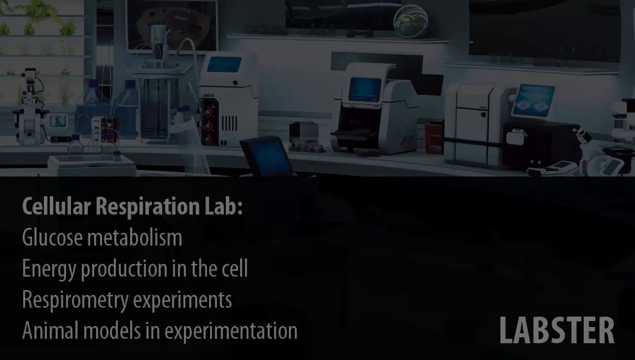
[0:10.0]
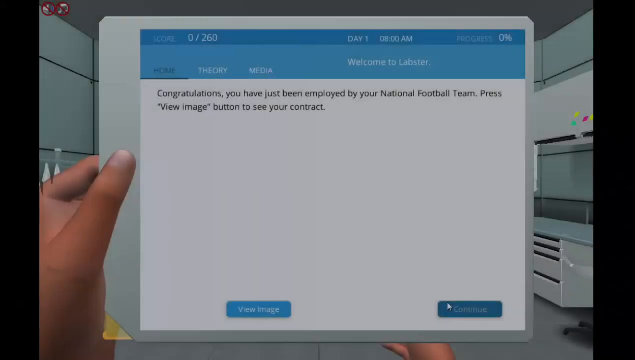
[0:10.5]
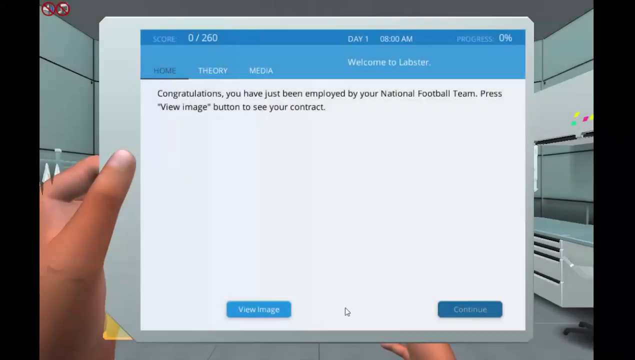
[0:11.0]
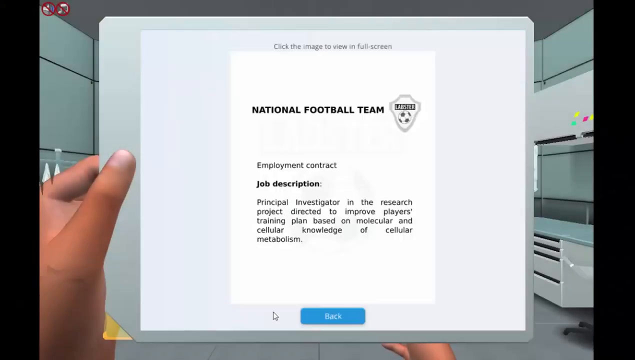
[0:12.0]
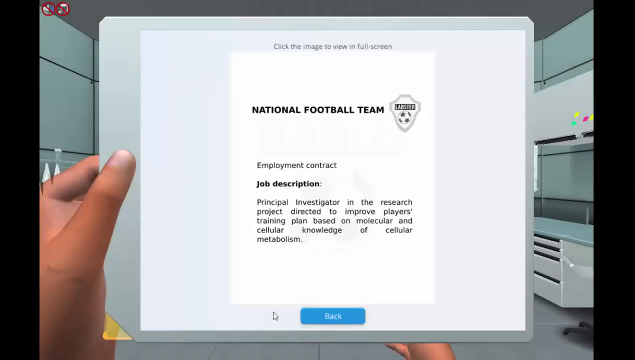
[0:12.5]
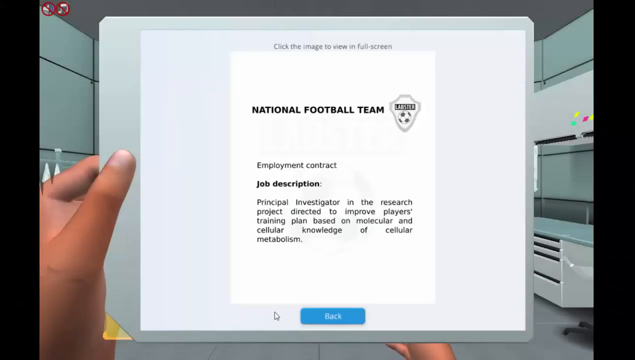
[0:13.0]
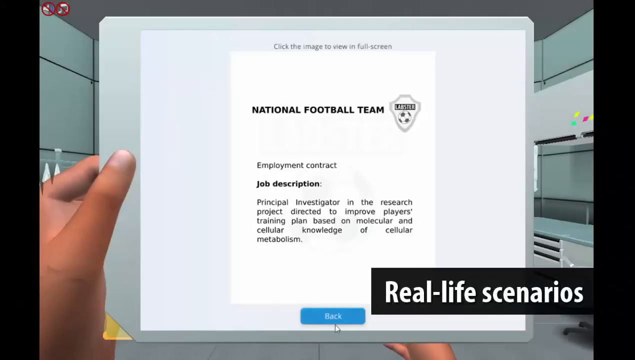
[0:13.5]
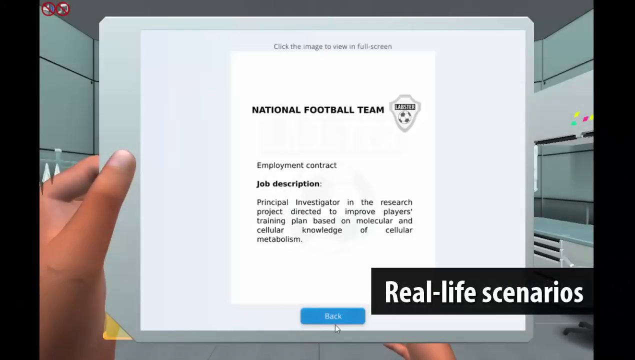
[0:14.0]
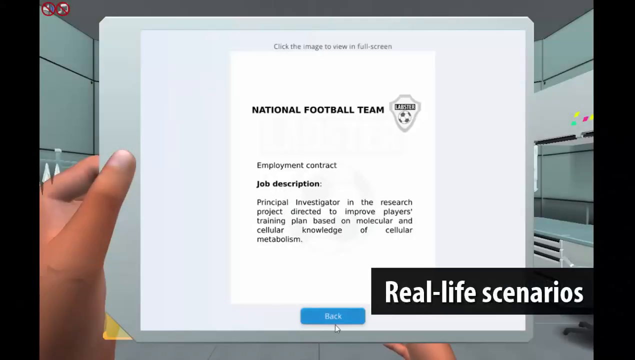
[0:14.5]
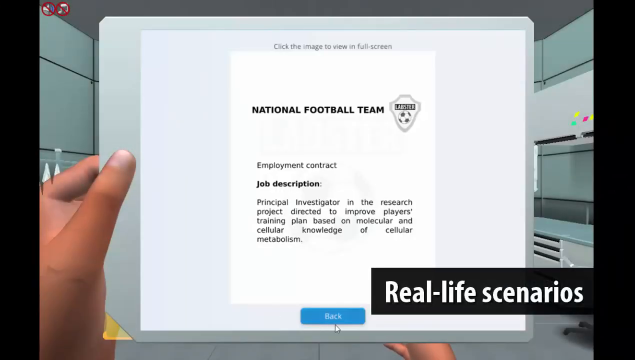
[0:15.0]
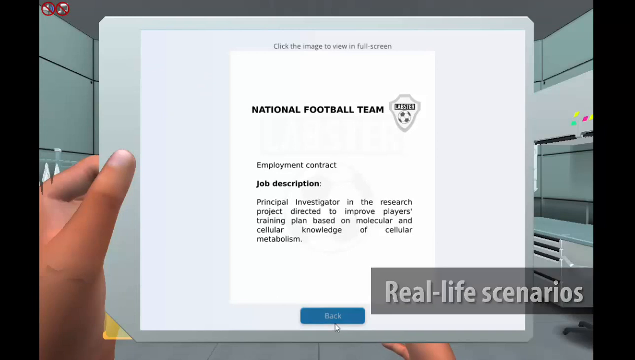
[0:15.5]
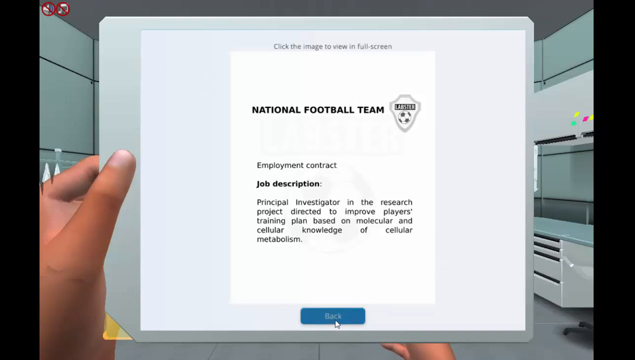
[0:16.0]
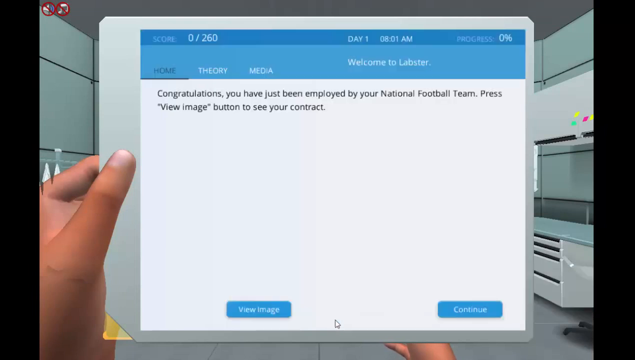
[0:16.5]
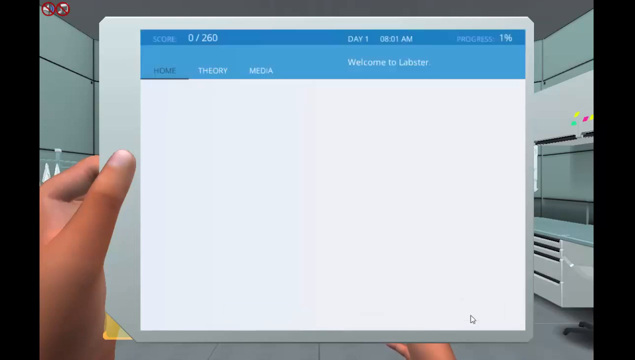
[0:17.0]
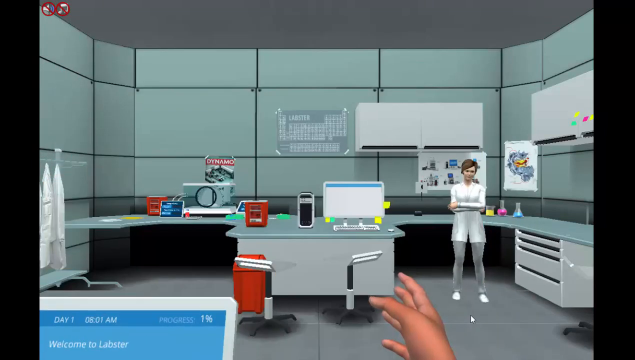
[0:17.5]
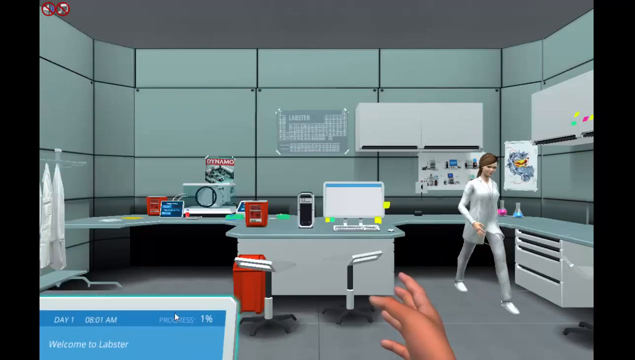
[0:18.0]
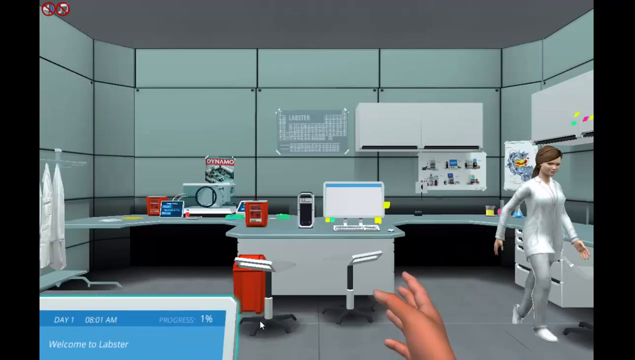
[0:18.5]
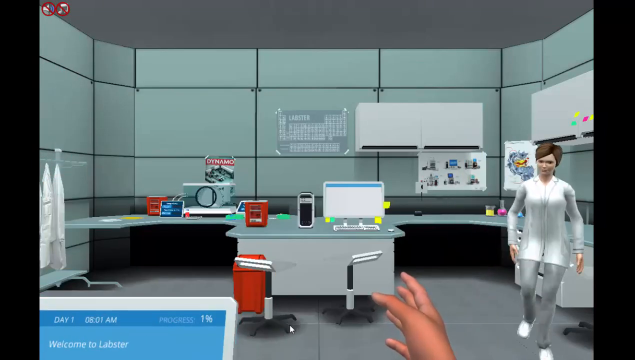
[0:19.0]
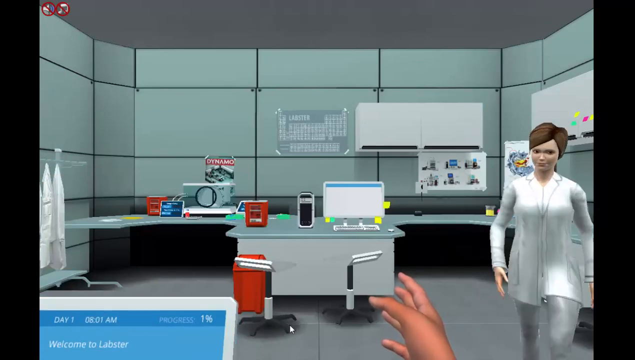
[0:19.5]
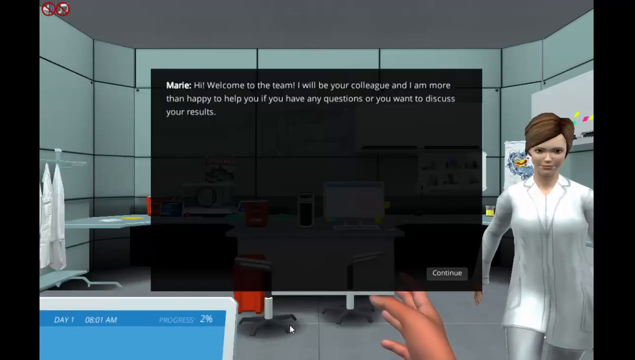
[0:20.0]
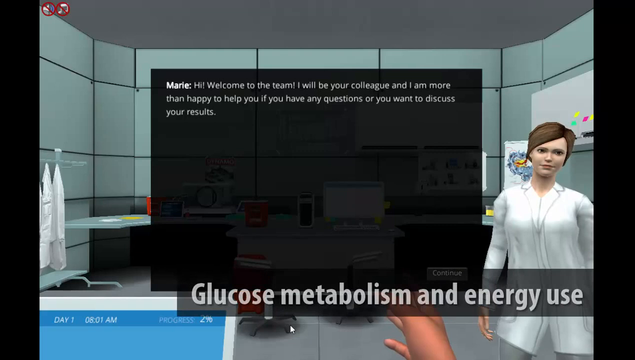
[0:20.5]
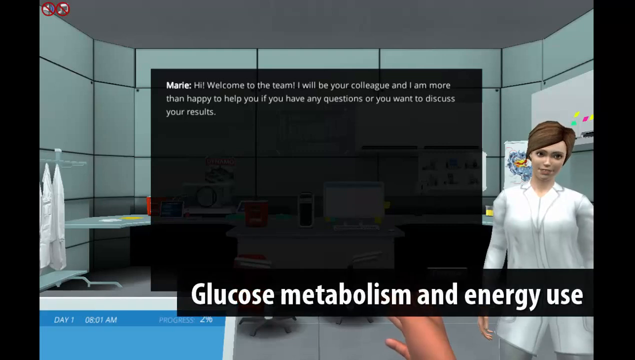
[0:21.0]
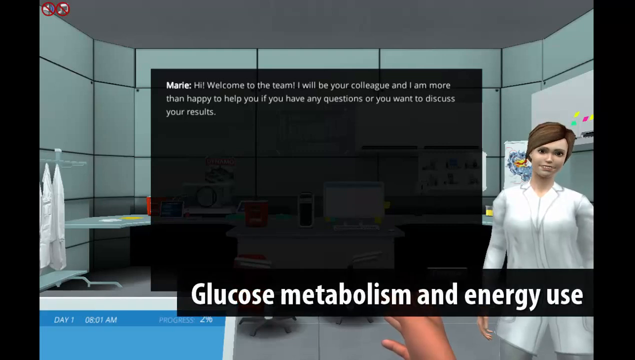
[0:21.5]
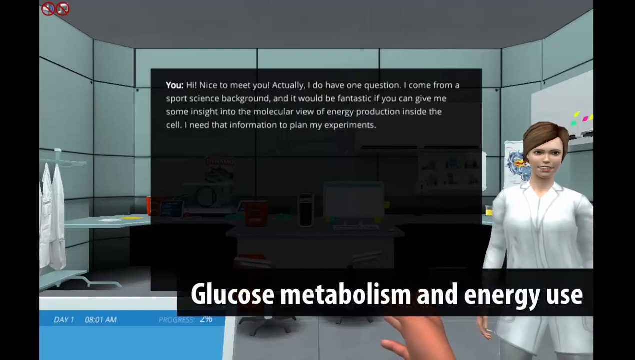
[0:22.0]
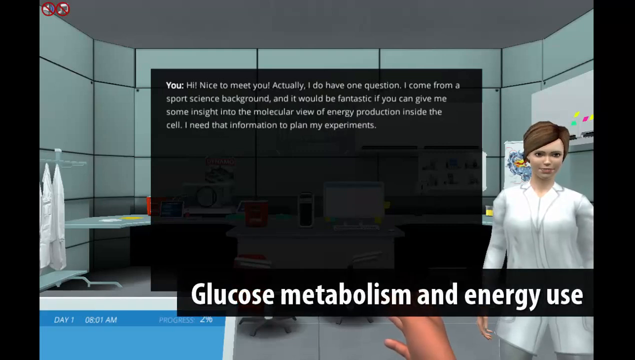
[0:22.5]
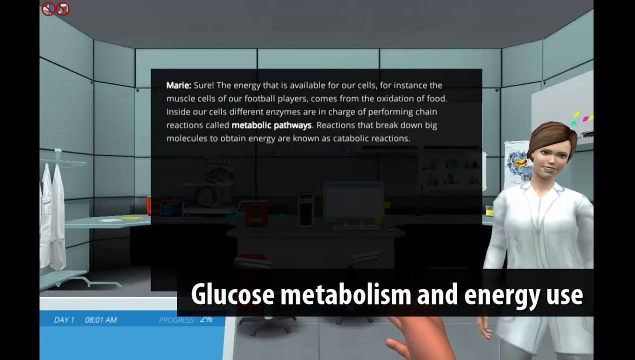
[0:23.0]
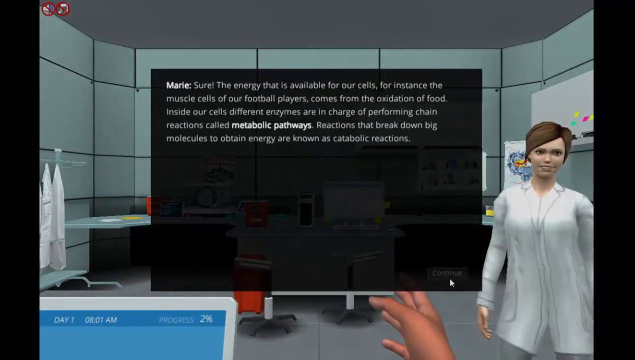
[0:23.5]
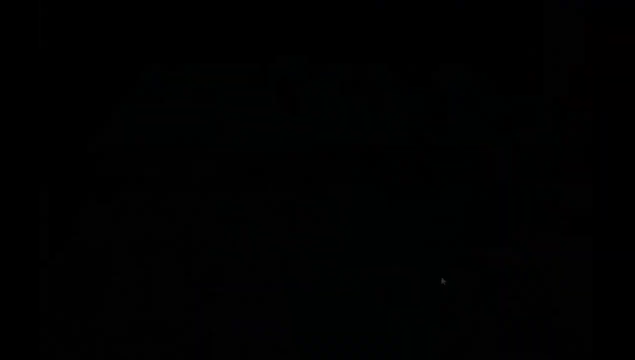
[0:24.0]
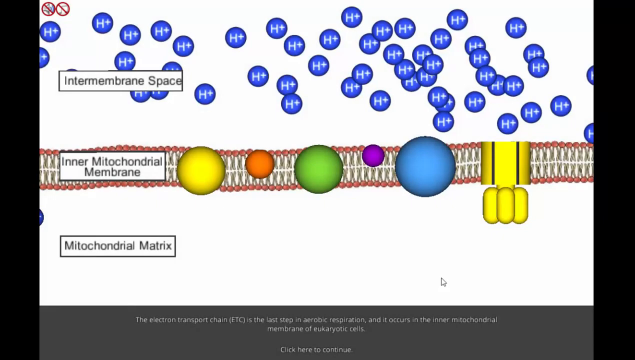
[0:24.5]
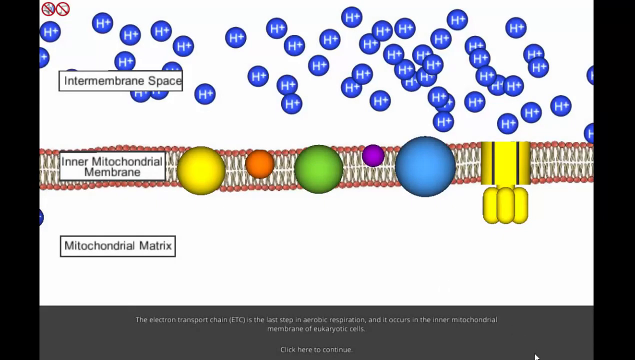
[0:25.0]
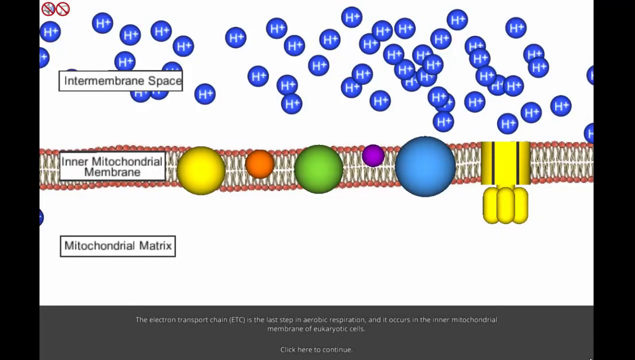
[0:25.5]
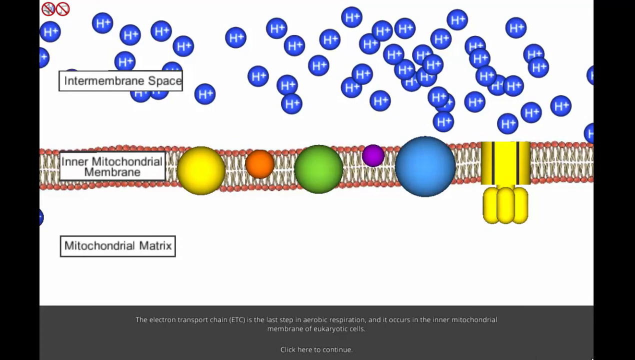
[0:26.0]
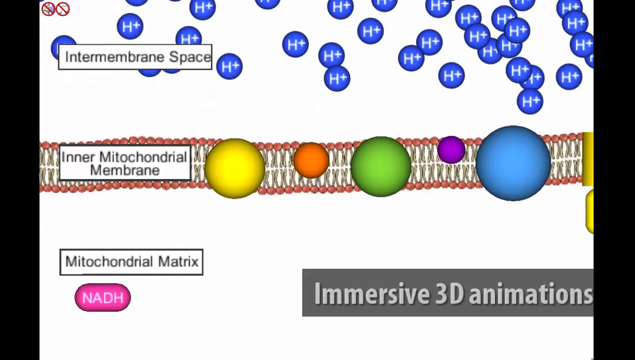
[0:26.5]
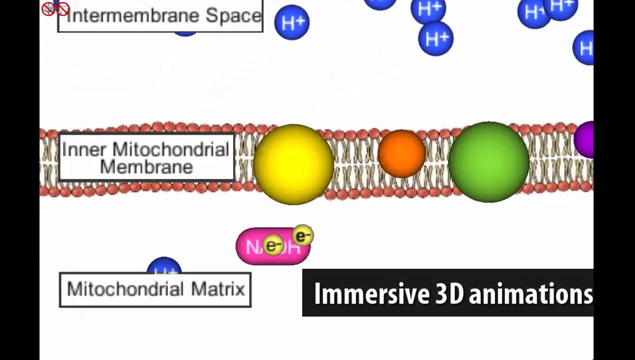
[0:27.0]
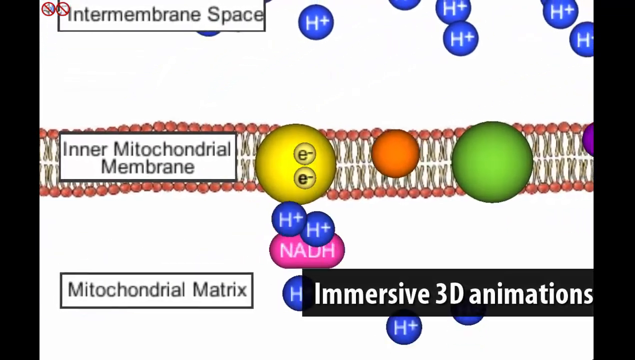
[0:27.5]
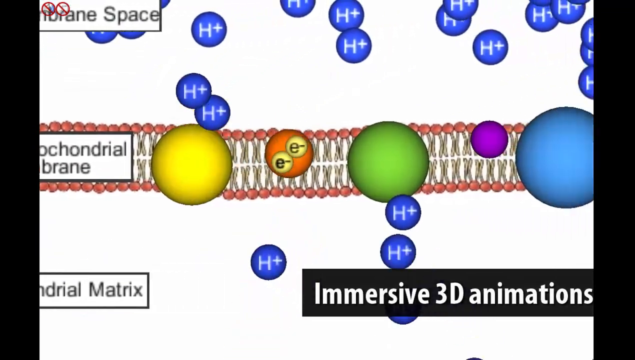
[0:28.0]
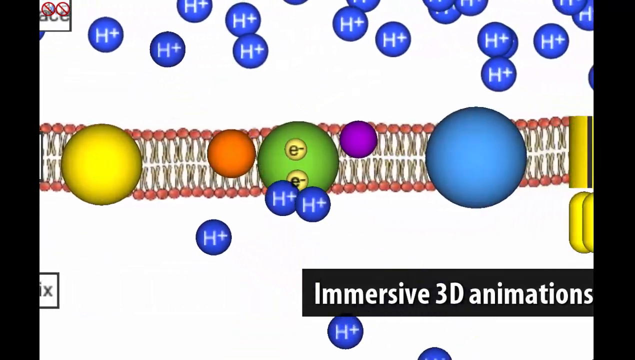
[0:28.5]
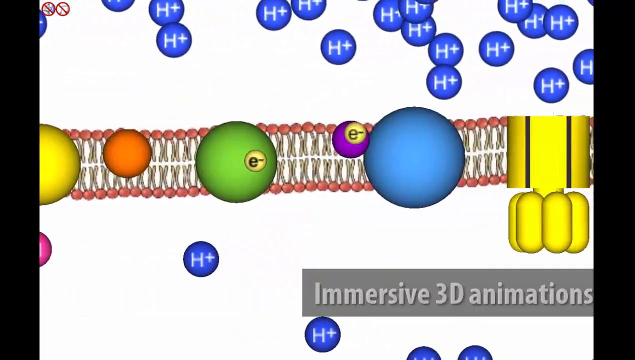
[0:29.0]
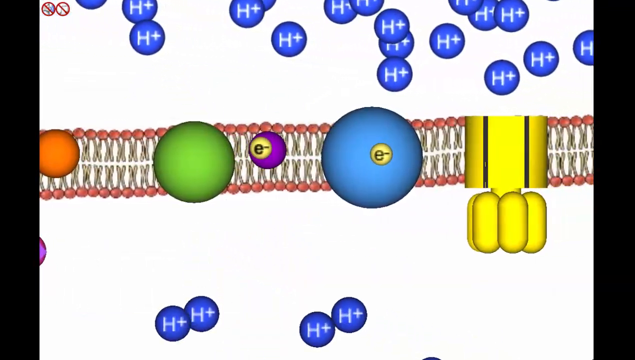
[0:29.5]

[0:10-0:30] A white clipboard-like board with a white piece of paper on it is shown, with someone's hand holding it on the left side; the paper is a digital picture. At the very top it says "congratulations you have just been employed by your national football team press view image button to see your current contract", and at the very bottom of the sheet there is a view image button, which gets pushed. Another white sheet appears; at the very top in black it says "National Football Team", underneath that "Employee Contract", then in bold black "Job Description", and under that "Principal Investigator in the Research Project Directed to Improve Players Training Plan Based on Molecular and Cellular Knowledge of Cellular Metabolism". In the bottom right-hand corner, in white inside a black rectangle, it says "Real Life Scenarios". The board is taken away, and a video game room appears with a digital woman with brown hair, wearing a white shirt and white pants, walking up to the camera. In the middle of the room there is a table with a gray tabletop, and on the left side of the room white lab coats are hung up. Across the bottom of the screen it says "glucose metabolism and energy use". A black square pops up; in its top left corner it says "Marie", and beside that "hi welcome to the team I will be your colleague and I am more than happy to help you if you have any questions or you want to discuss your results".